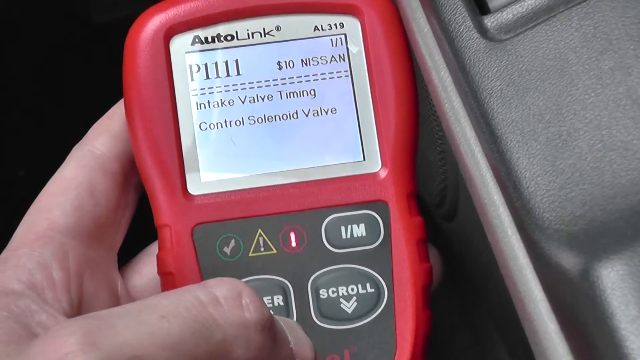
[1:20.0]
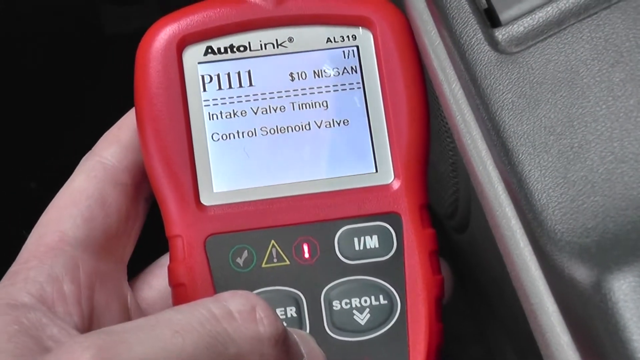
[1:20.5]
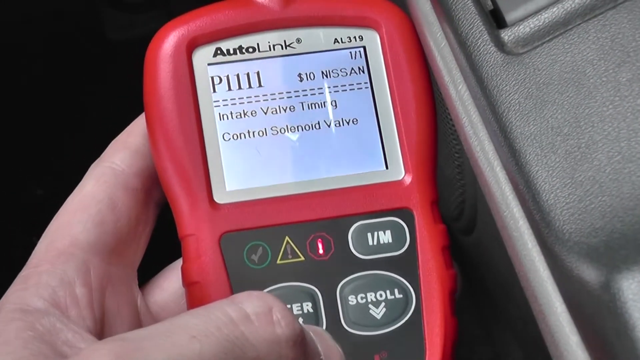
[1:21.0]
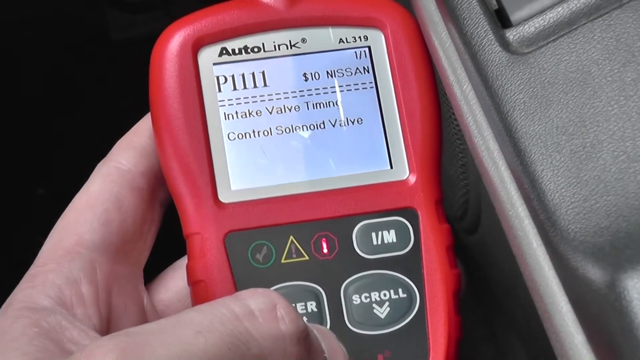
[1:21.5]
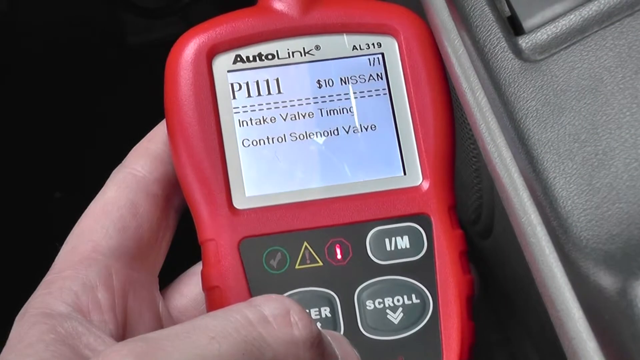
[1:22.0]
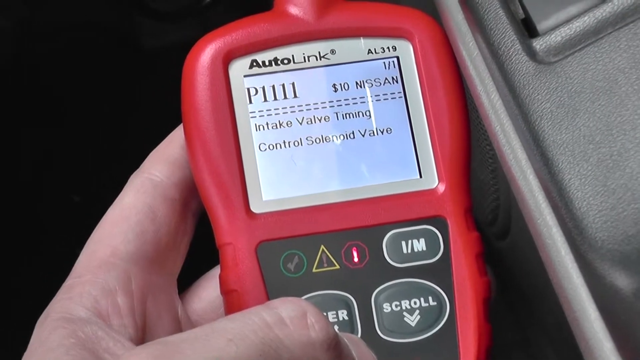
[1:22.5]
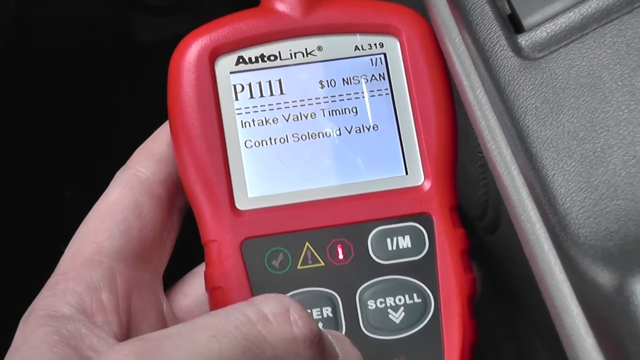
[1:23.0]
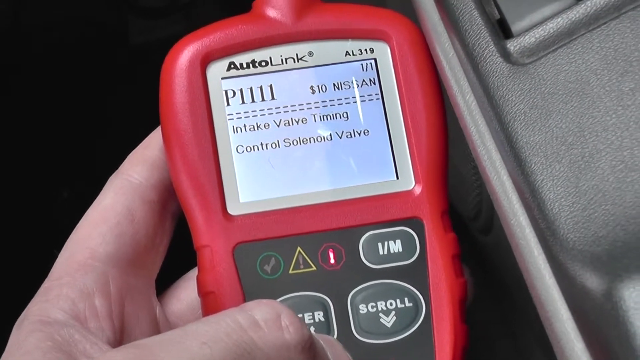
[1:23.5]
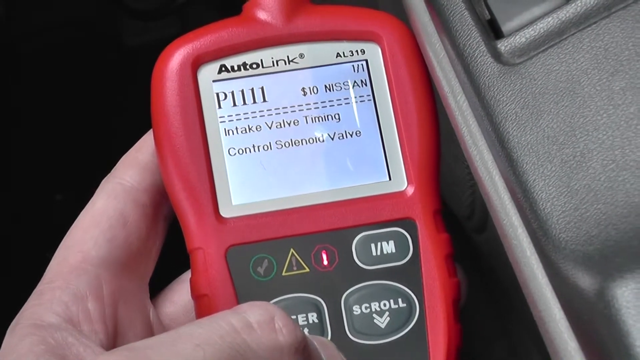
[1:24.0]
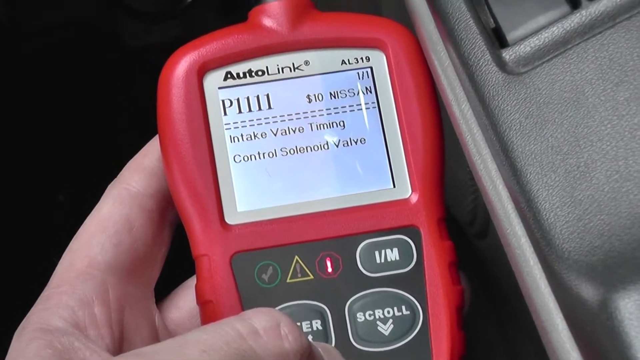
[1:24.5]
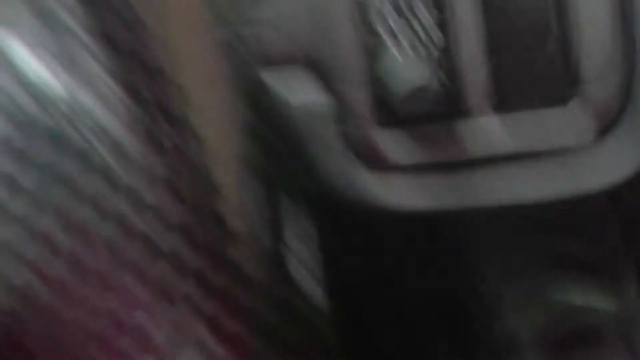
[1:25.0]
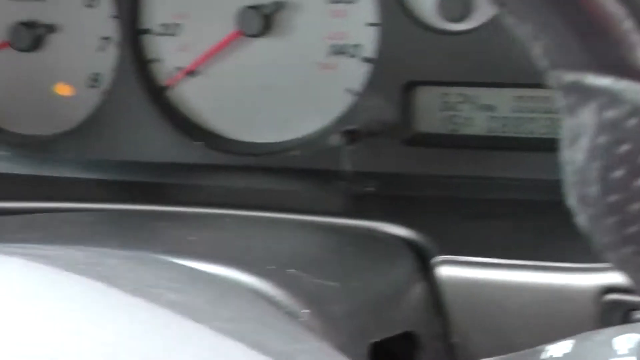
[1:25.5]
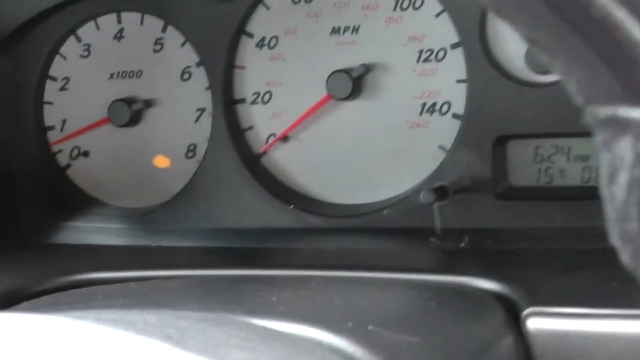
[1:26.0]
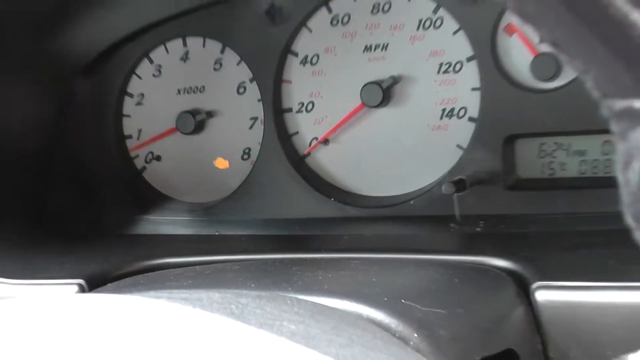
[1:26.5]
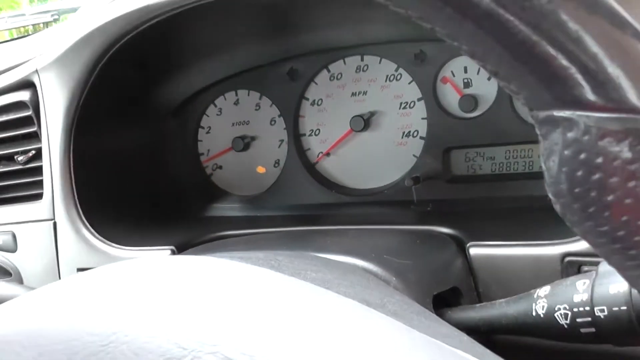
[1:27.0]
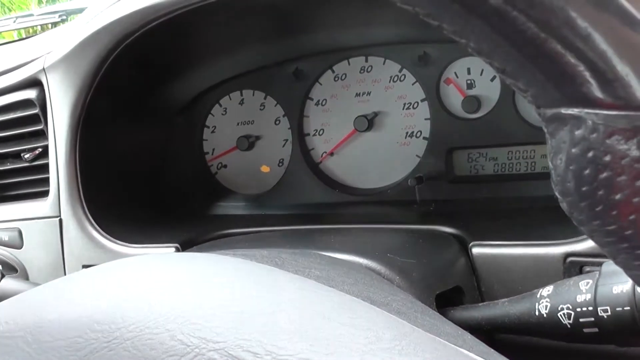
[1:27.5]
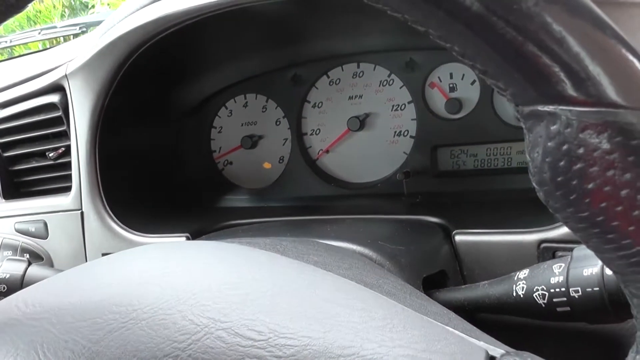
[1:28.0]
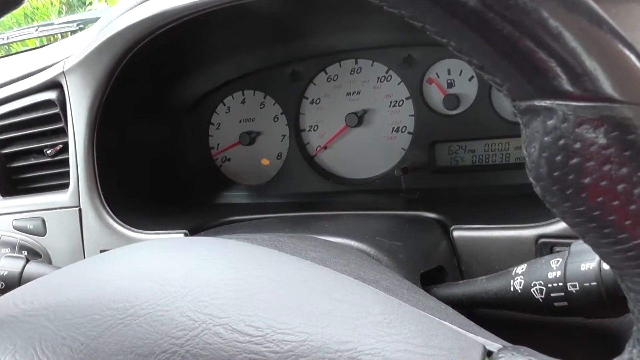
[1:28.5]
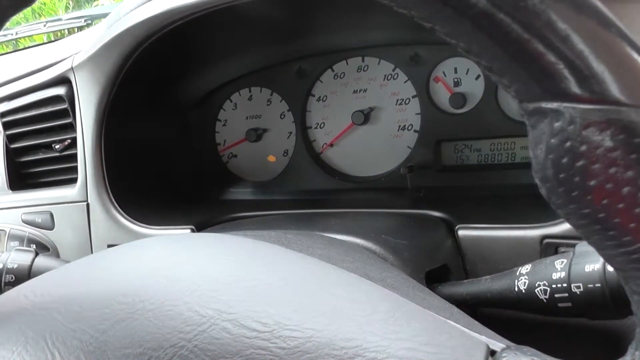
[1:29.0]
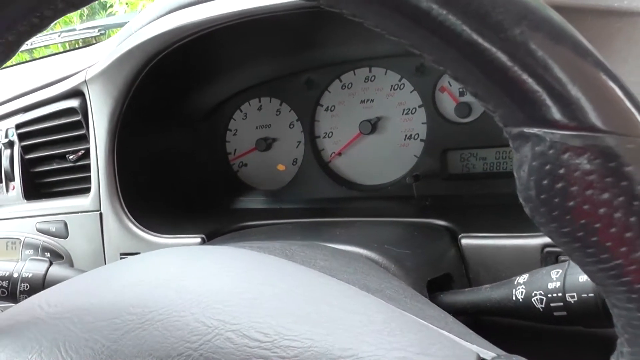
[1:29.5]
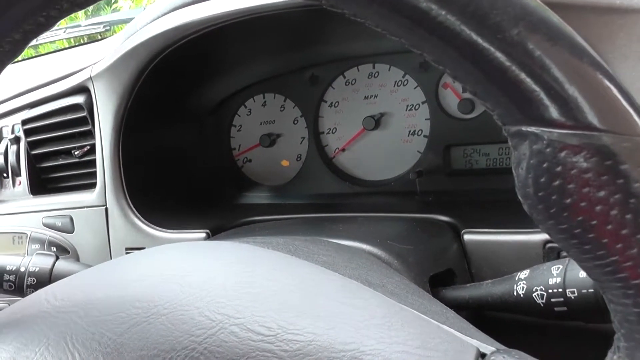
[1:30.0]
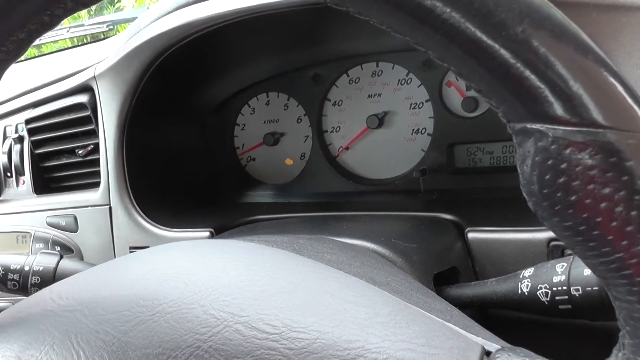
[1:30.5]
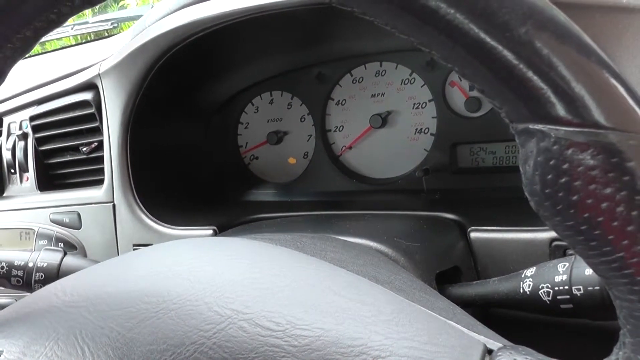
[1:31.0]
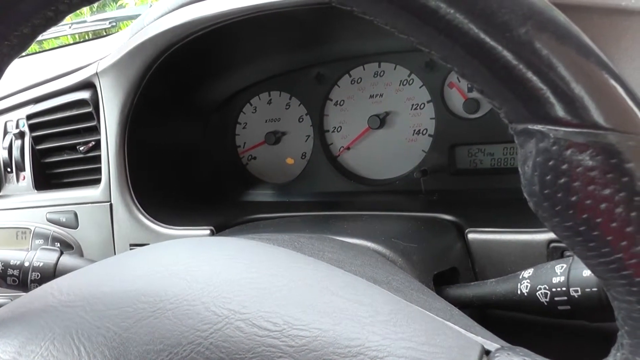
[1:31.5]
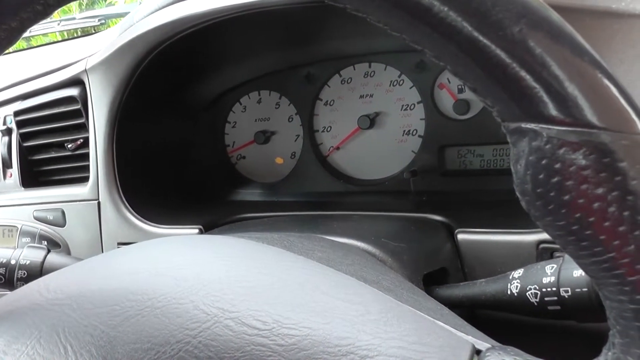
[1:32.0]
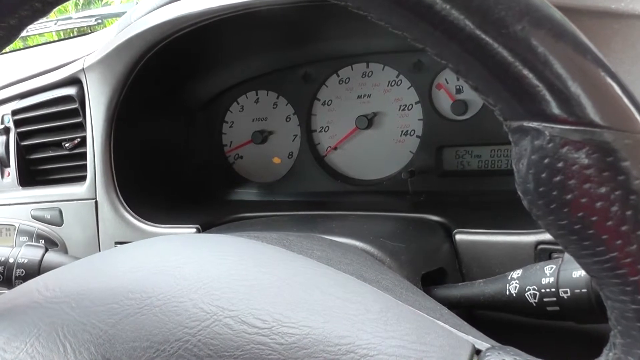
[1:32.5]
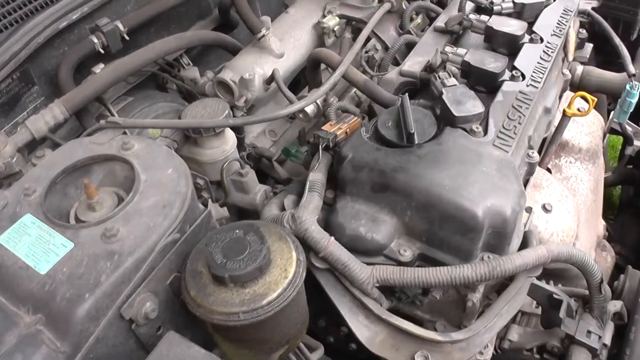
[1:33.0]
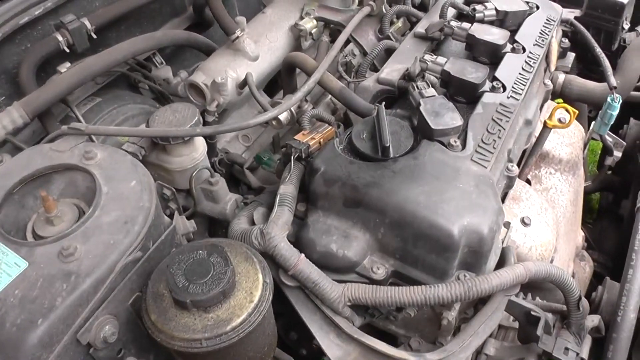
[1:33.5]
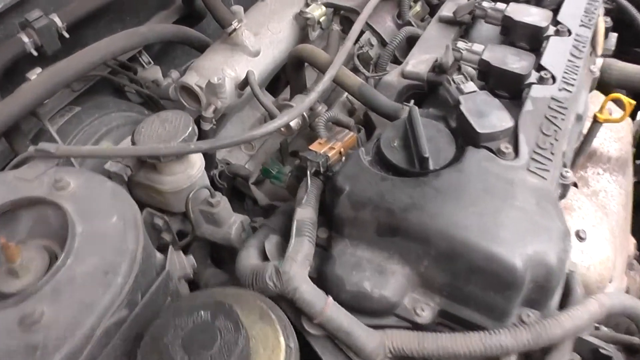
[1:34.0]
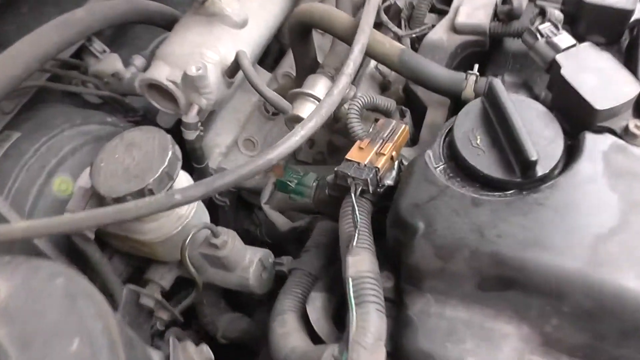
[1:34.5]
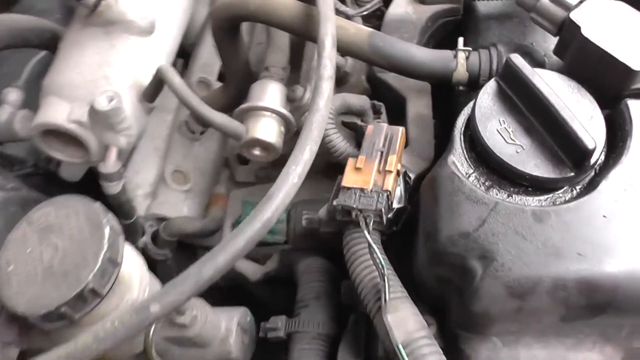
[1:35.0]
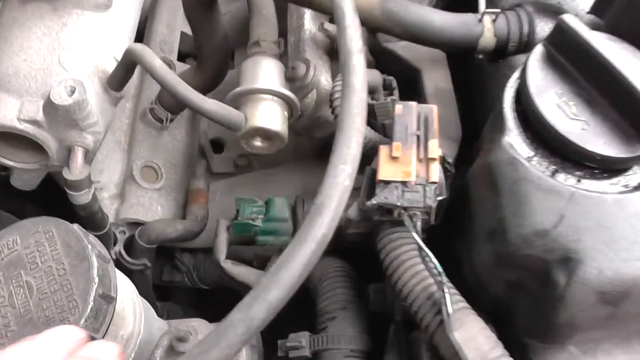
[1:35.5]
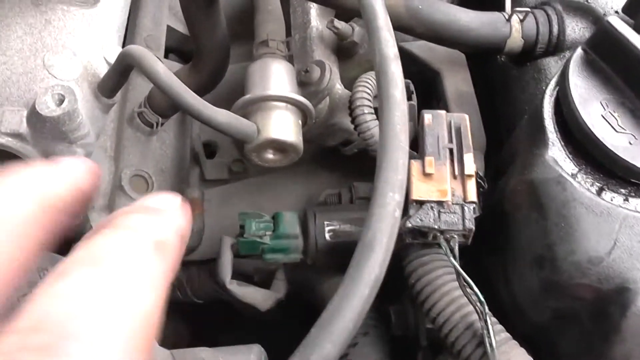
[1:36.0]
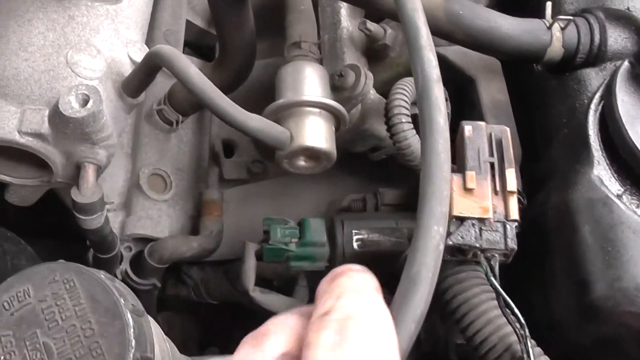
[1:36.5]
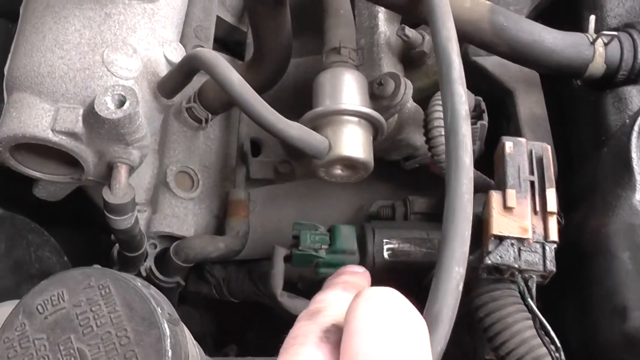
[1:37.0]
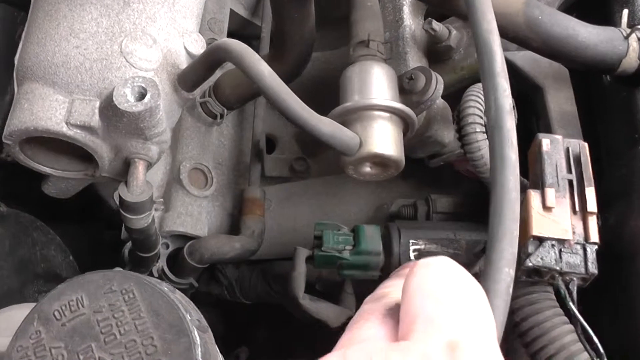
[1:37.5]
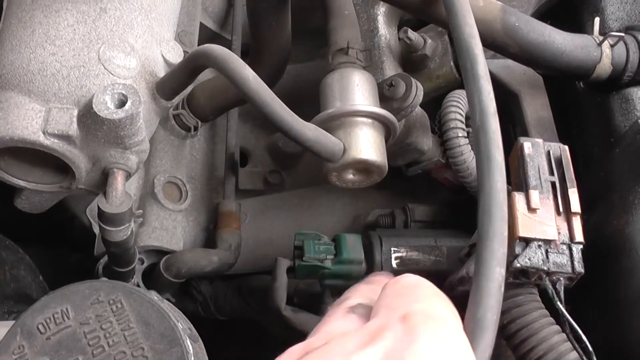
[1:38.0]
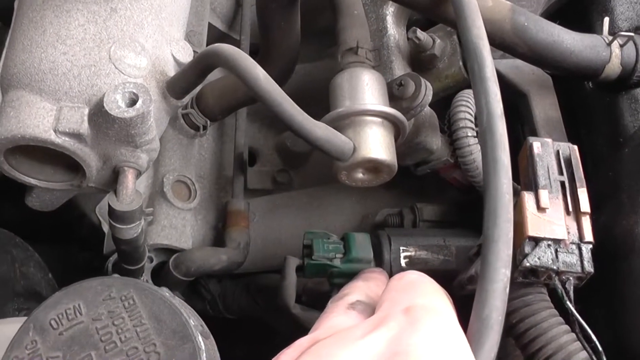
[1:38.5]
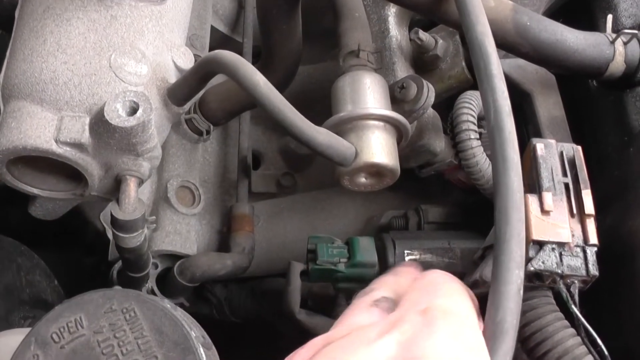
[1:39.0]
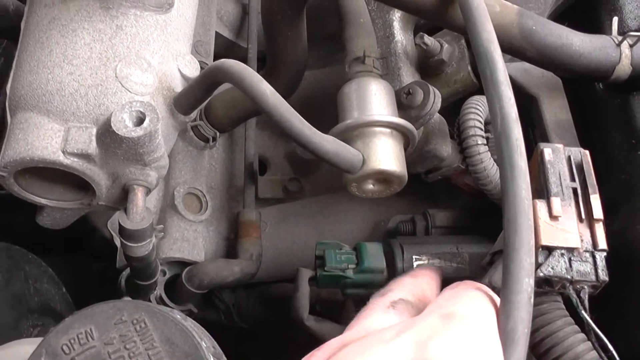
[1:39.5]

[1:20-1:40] The small red diagnostic tool is in the mechanic's left hand, his fingers touching the back of the device while his thumb works the buttons; it is still connected to the port underneath the dashboard. The camera moves back up to the instrument panel, viewed from the driver's seat: the RPM panel, the MPN panel in the middle as the larger circle, and the fuel circle on the right as the smallest circle. The camera zooms out a bit, and the view is now under the hood. The mechanic points his index finger at a black valve, and a small slender black hose next to it shakes a bit left to right as if he bumped it, as he points toward the intake valve timing control solenoid valve that is causing the issue with the car.